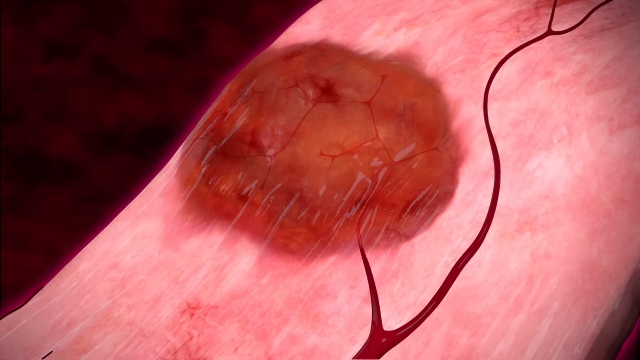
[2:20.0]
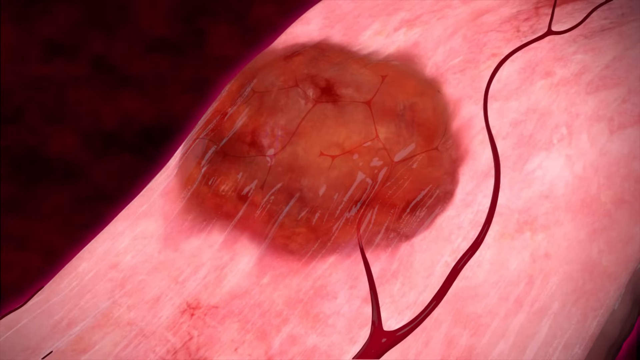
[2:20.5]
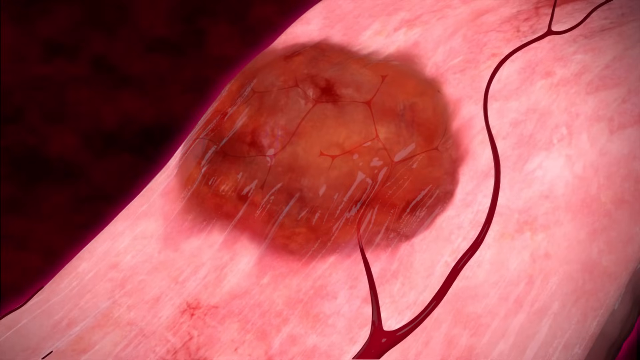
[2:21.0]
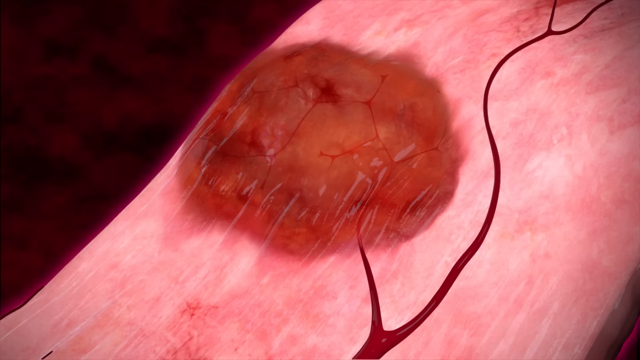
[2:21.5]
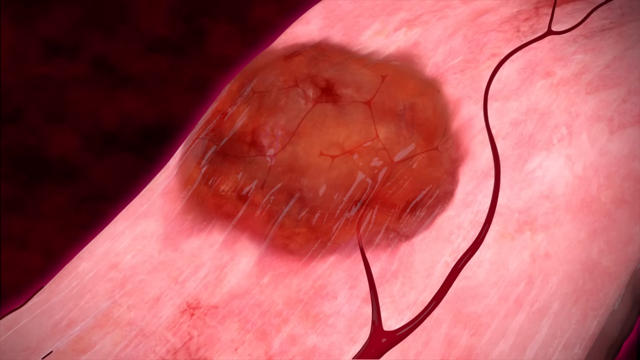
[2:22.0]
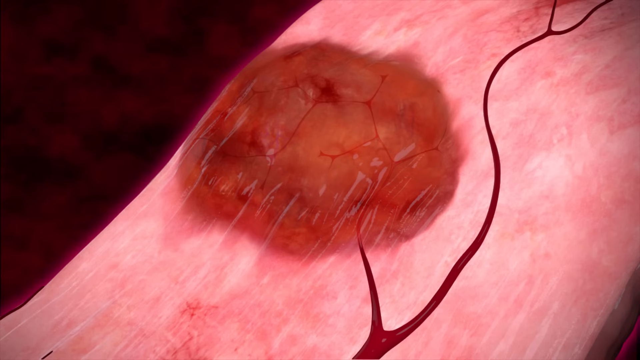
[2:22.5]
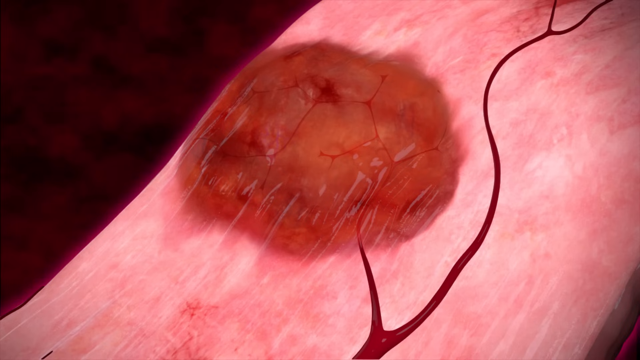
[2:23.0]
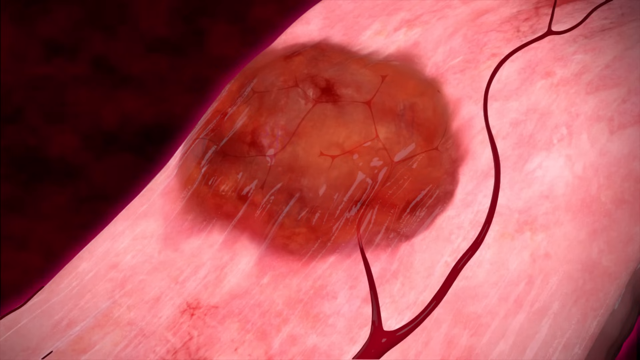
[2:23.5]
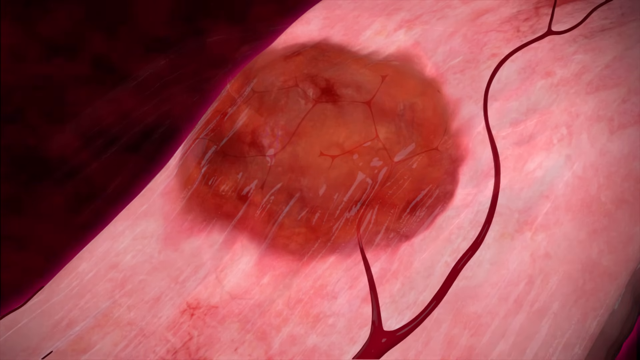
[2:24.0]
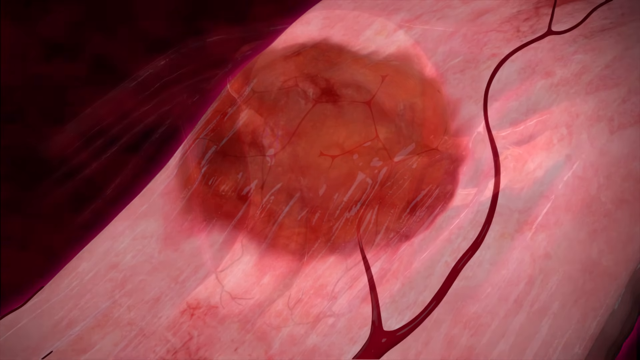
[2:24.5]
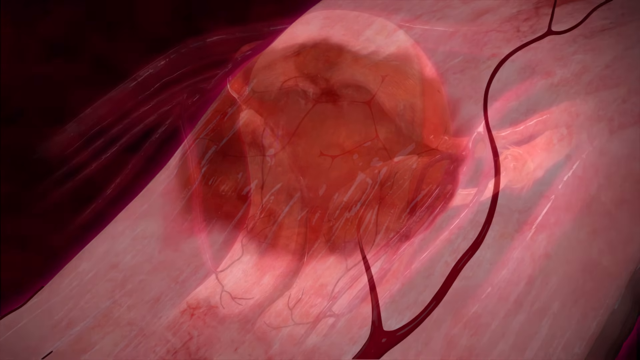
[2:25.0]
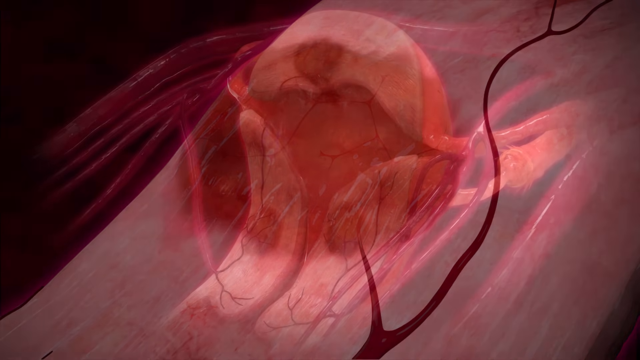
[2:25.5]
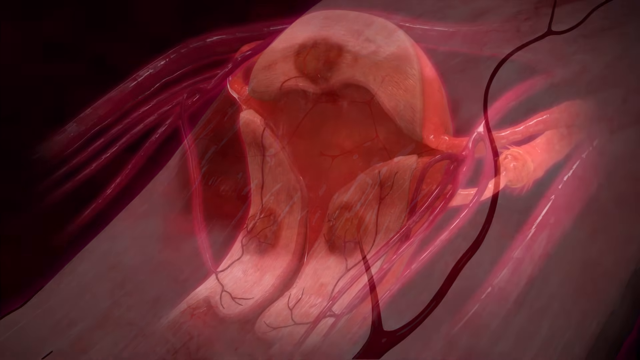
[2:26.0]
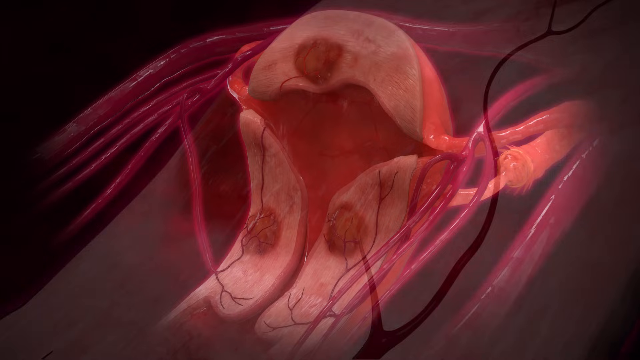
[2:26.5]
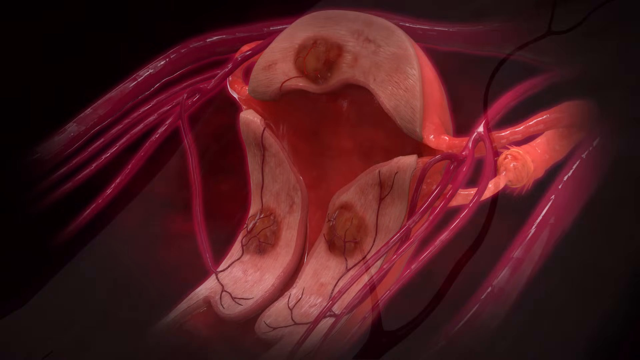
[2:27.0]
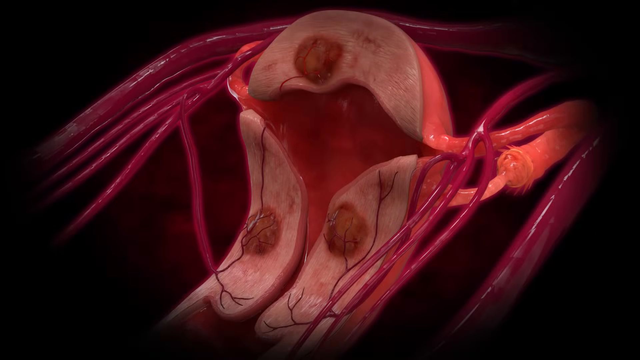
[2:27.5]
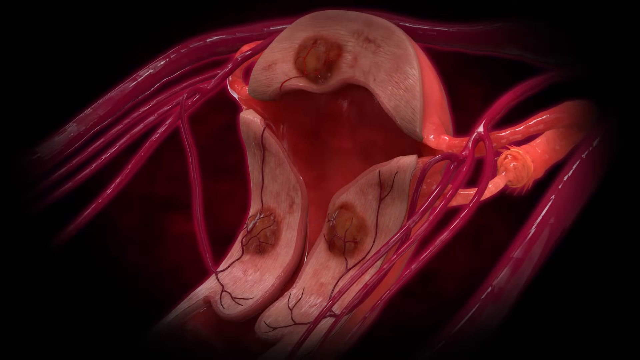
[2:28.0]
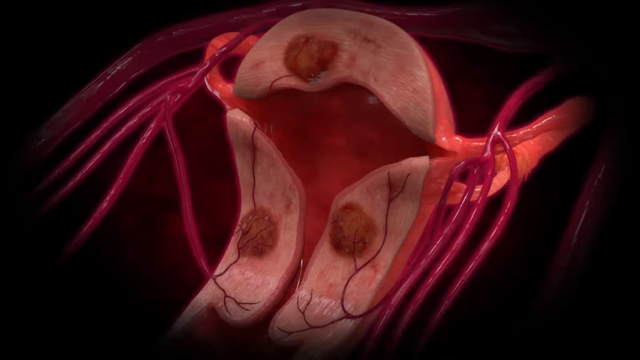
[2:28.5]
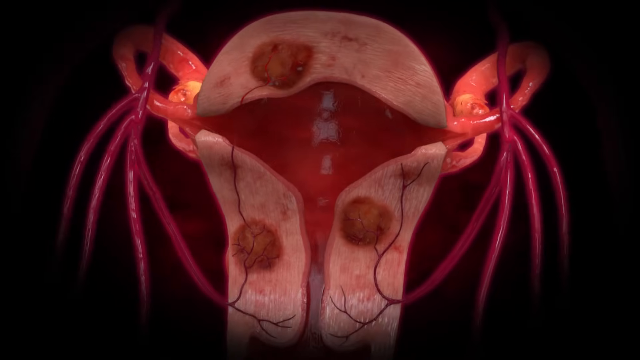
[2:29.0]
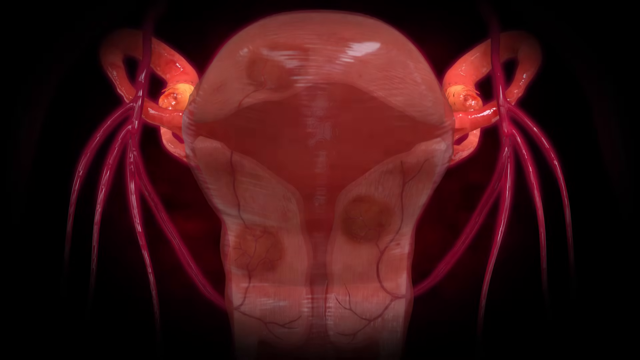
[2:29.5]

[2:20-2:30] In a CGI demonstration, medicine like bubbles travels through the veins and dams up at an area shaped like a Y where the blood would split in two directions, blocking it. The bubbles look clear. The blood supply to the fibroid is cut off and the fibroid shrinks. The uterus is then shown cut in half so its inside is visible, with the dead fibroids looking like sores, and then it returns to a healthy-looking regular uterus with no fibroids.